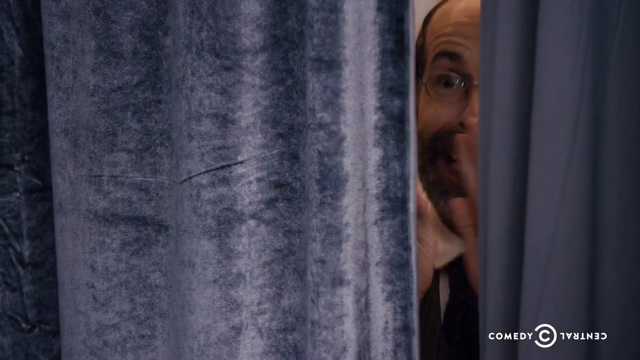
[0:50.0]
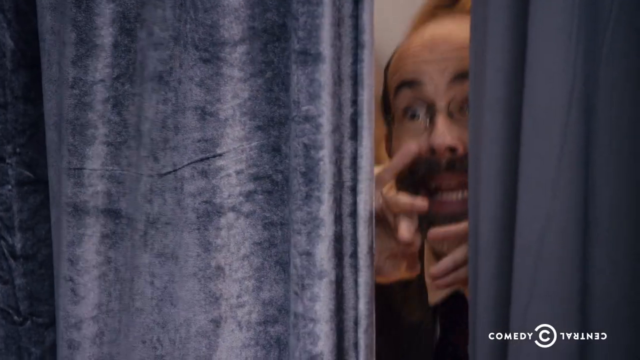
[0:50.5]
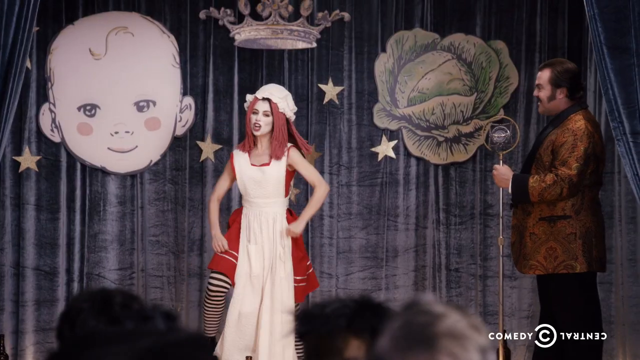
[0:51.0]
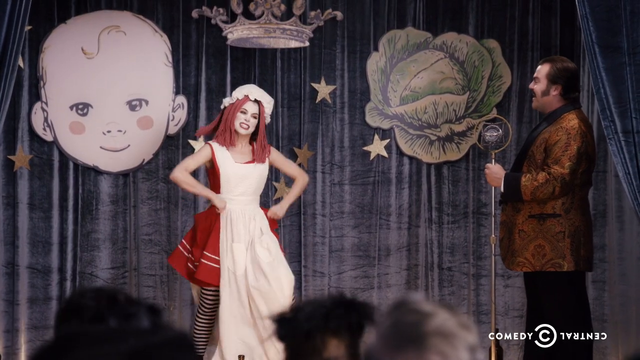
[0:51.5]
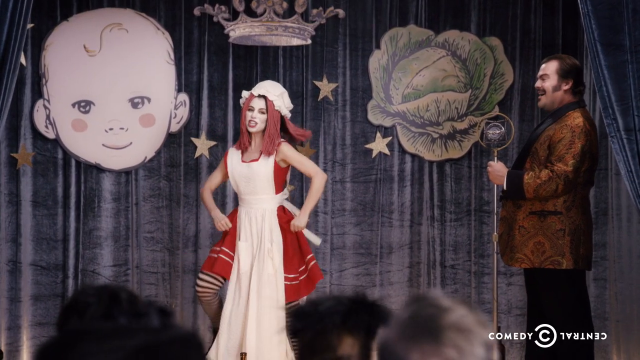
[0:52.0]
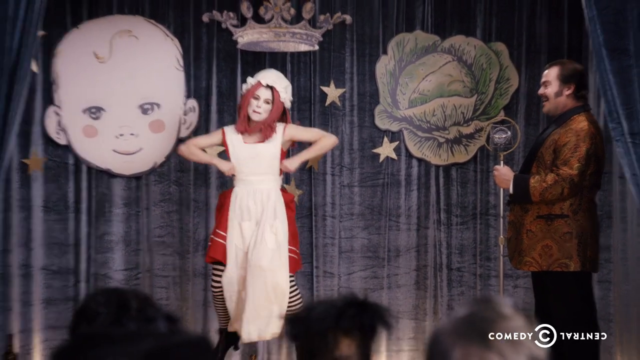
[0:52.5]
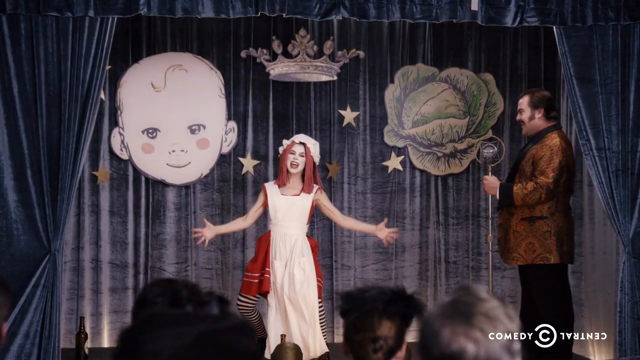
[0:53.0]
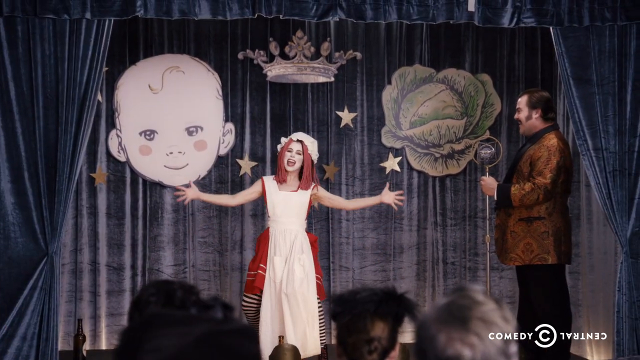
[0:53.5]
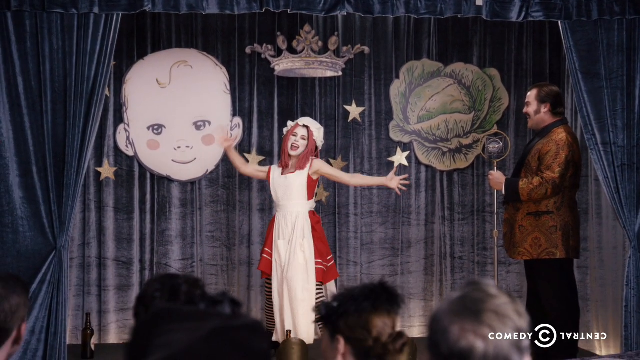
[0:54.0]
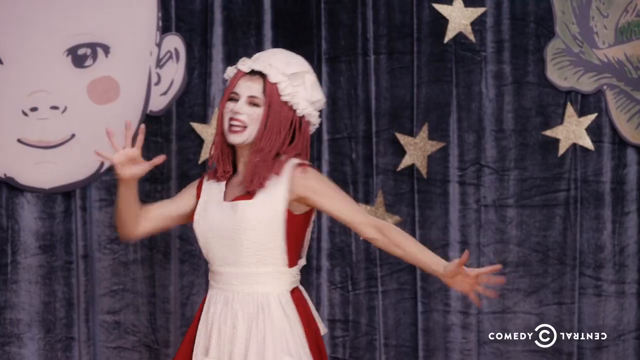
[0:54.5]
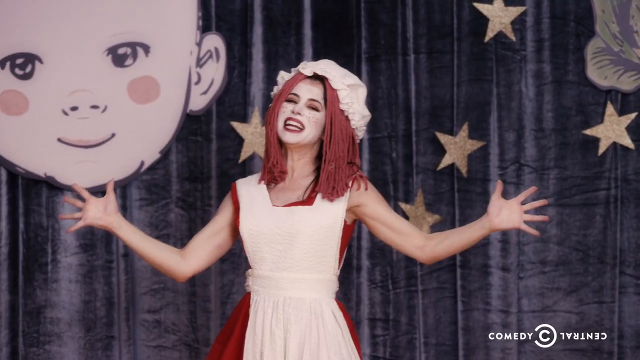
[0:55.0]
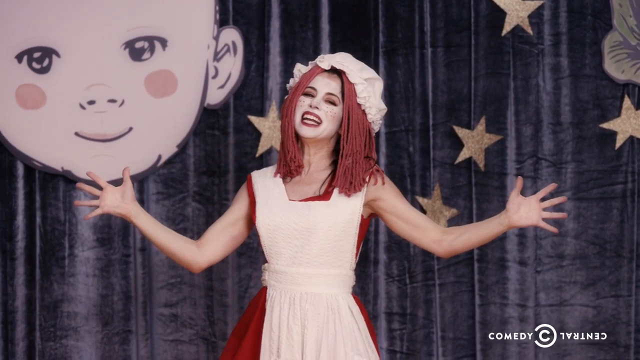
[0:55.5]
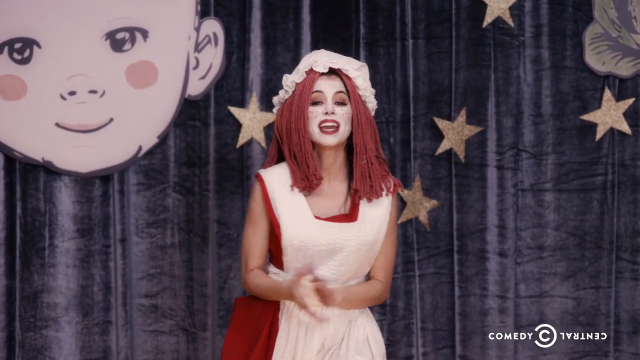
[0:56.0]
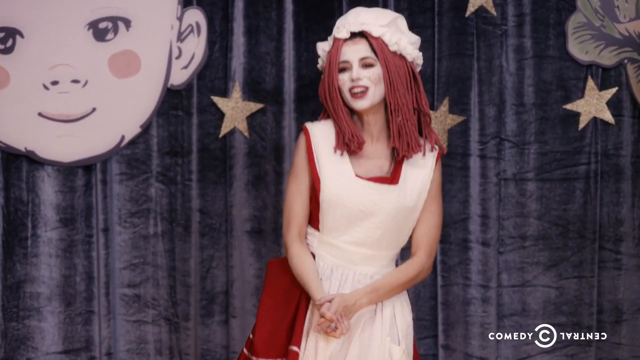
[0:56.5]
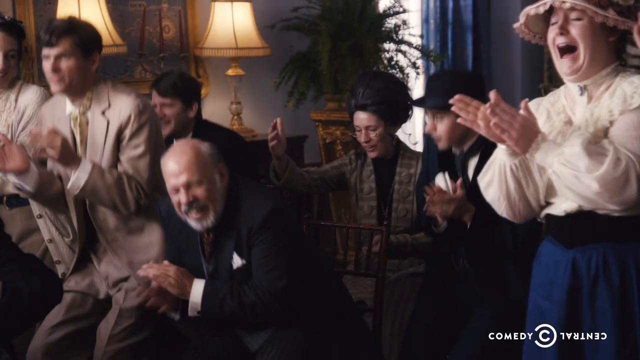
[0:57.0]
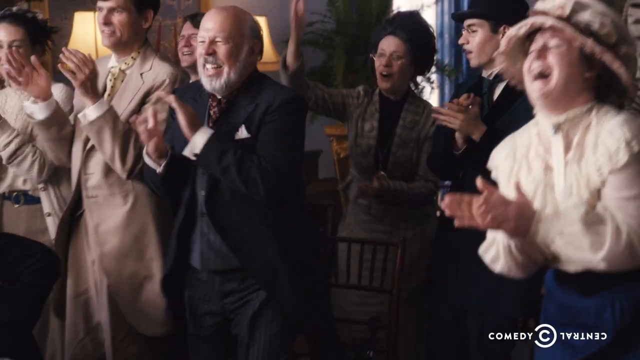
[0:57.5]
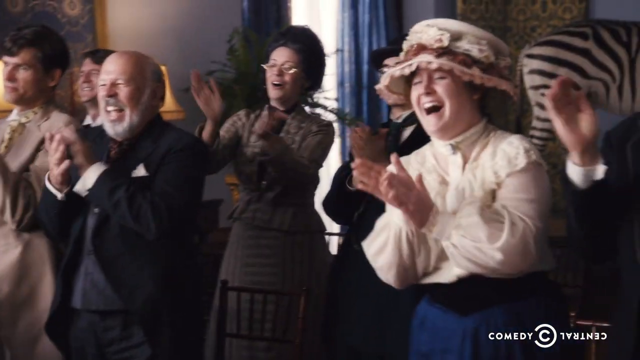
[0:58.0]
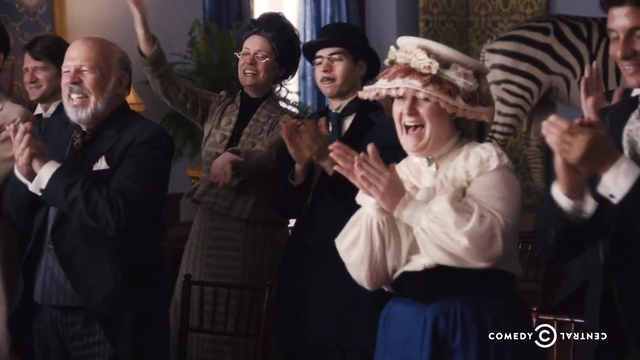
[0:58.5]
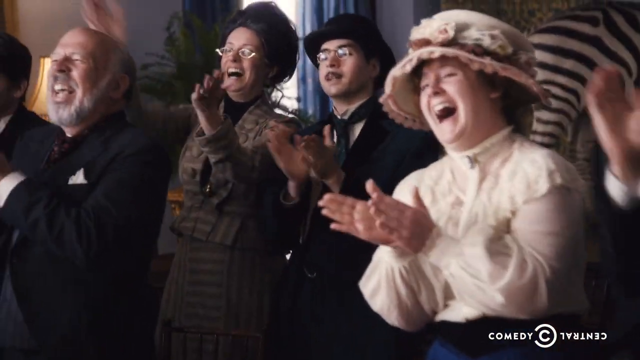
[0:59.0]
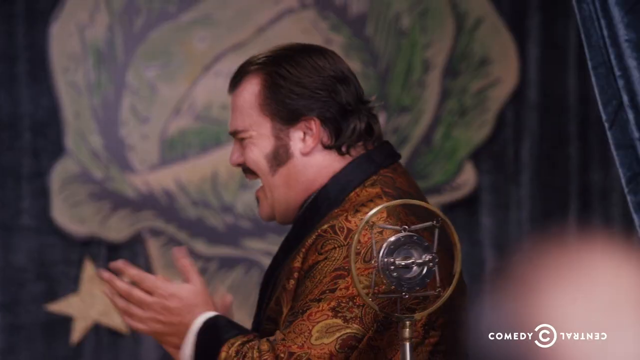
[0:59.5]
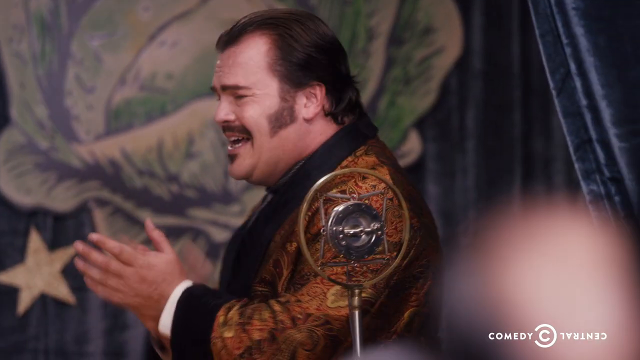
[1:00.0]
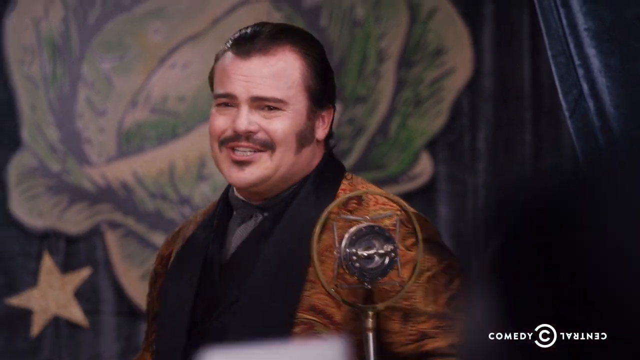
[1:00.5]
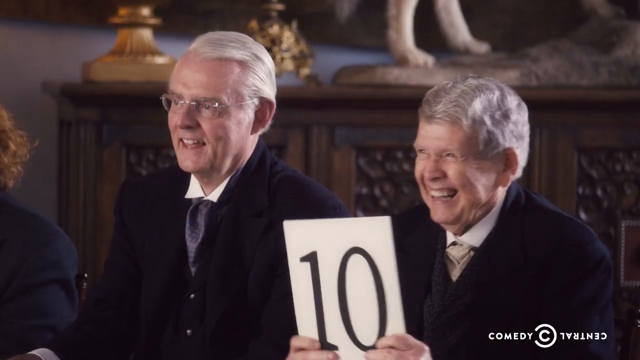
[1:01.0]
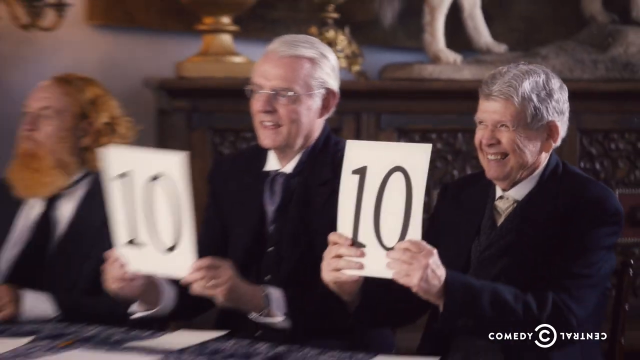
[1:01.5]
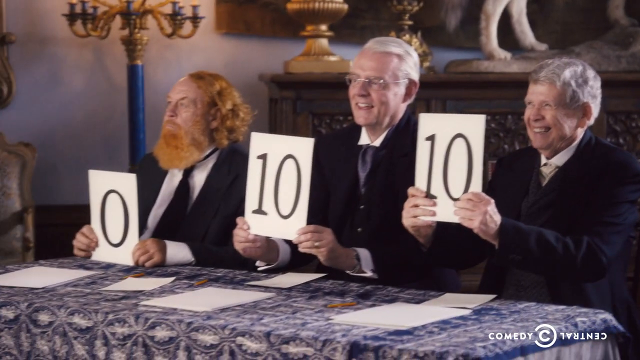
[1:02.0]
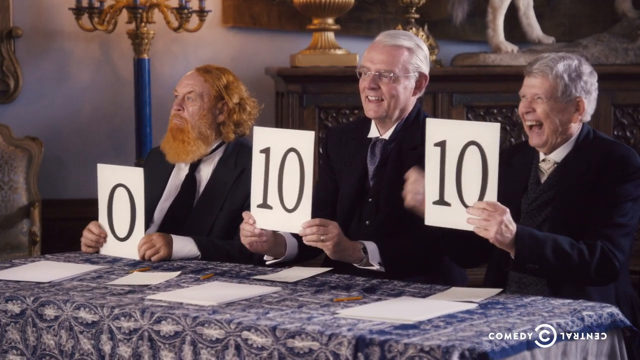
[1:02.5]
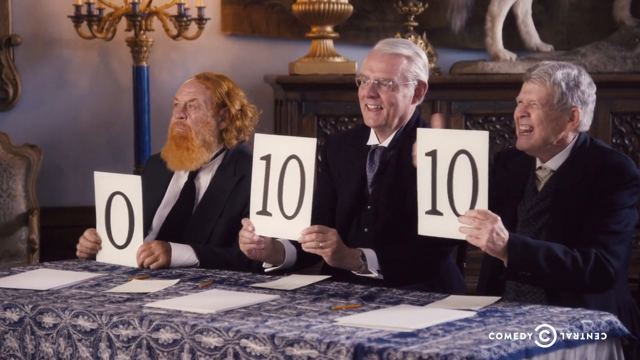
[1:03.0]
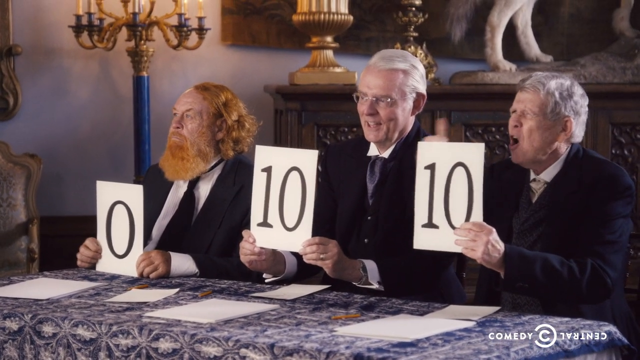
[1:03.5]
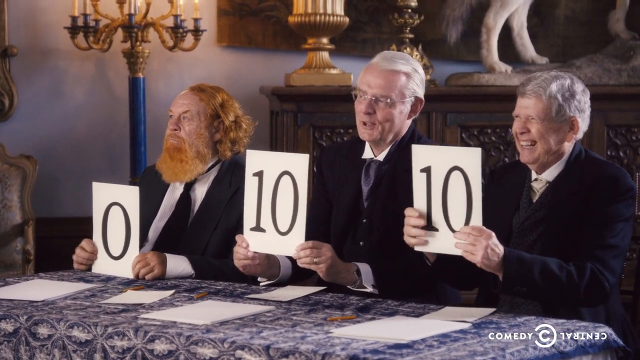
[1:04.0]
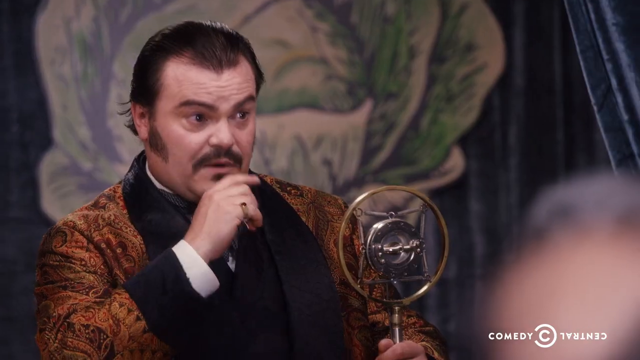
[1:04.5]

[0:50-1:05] The same comedy skit on Comedy Central continues on a stage, with the actors wearing what looks like Victorian-era fashion while singing and dancing together. The crowd is cheering, and there are judges; it appears to be a comedy show in which acts are judged, possibly a competition show, though that is unclear. A Comedy Central graphic is at the bottom of the screen, and it is unclear whether this is its own standalone show.